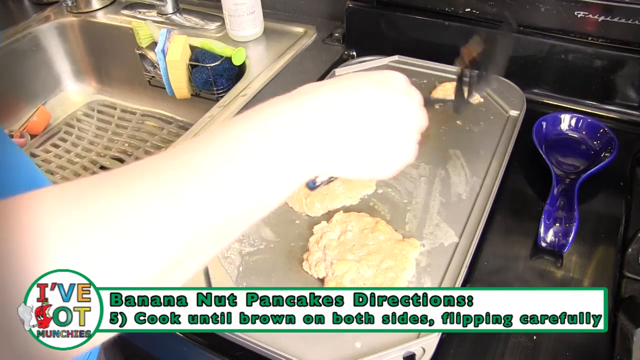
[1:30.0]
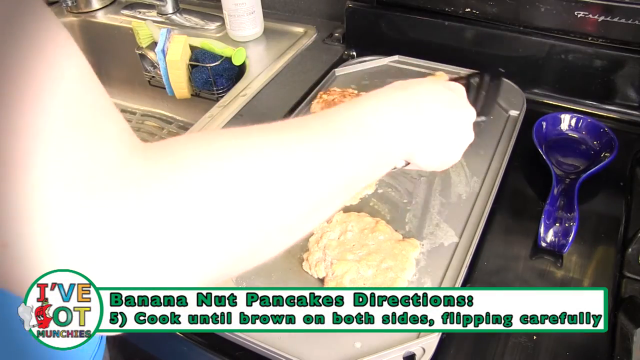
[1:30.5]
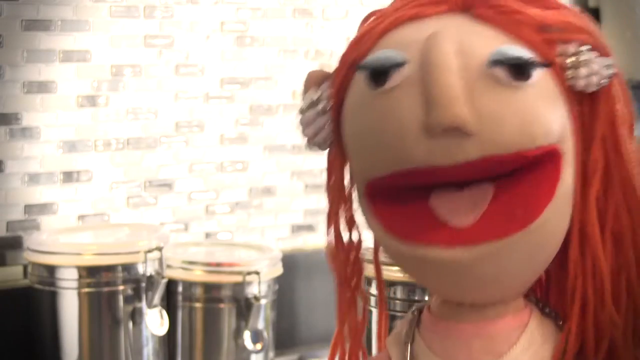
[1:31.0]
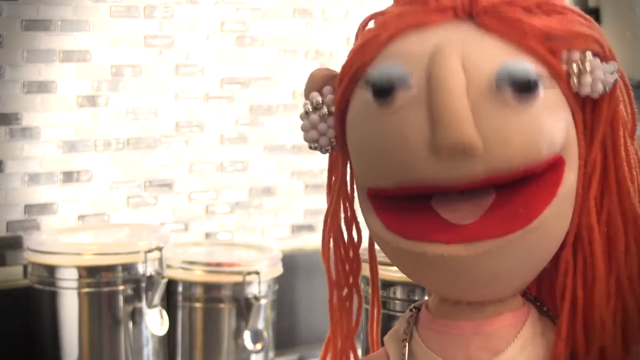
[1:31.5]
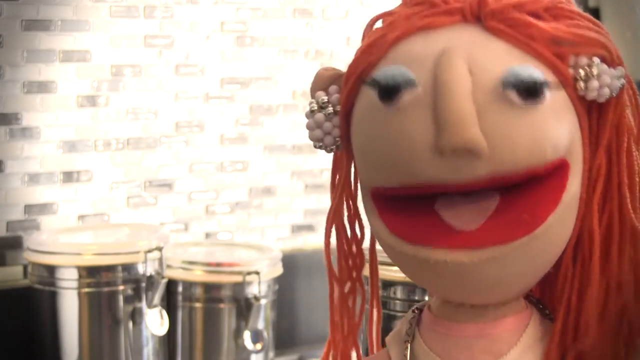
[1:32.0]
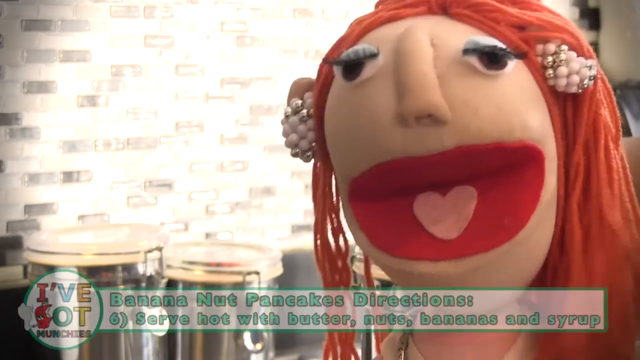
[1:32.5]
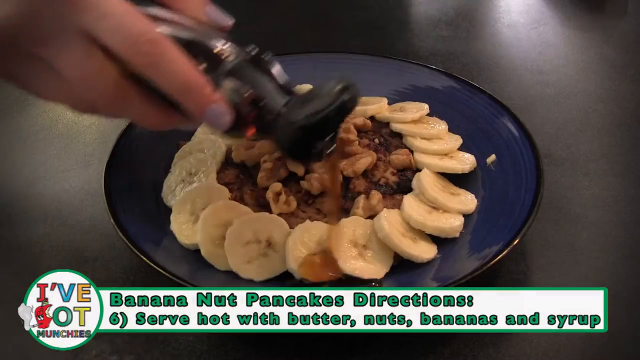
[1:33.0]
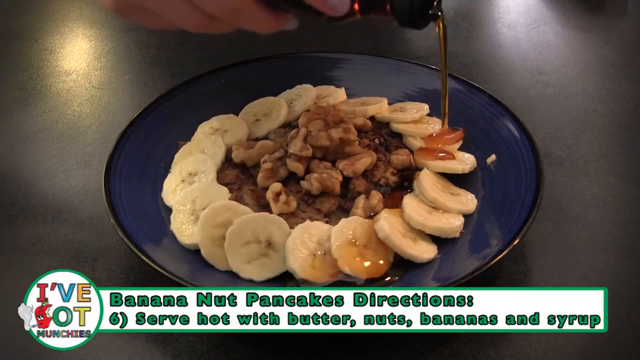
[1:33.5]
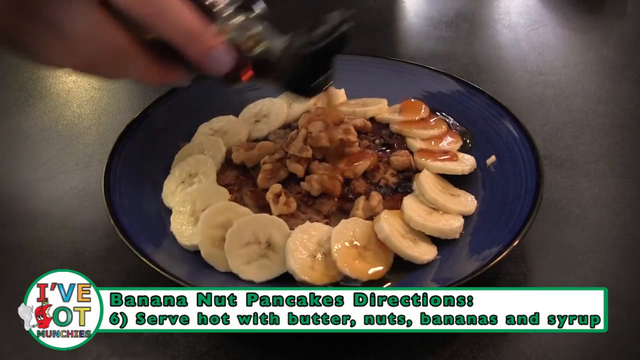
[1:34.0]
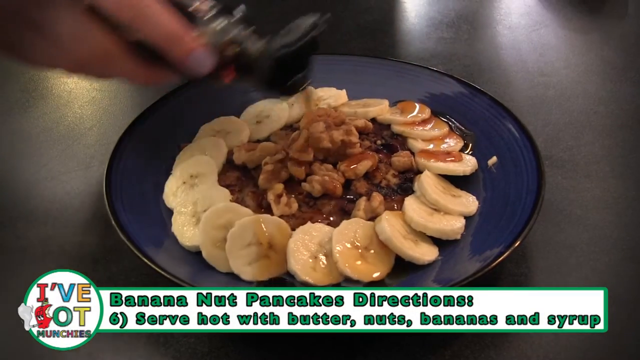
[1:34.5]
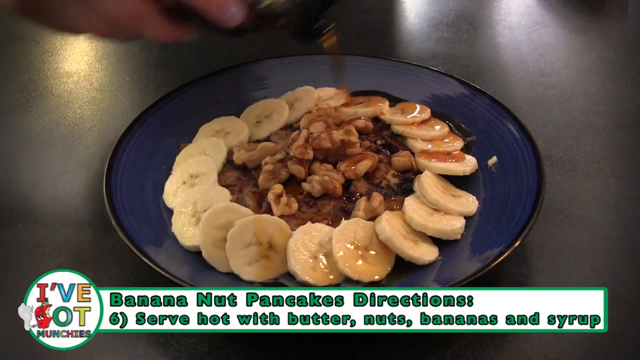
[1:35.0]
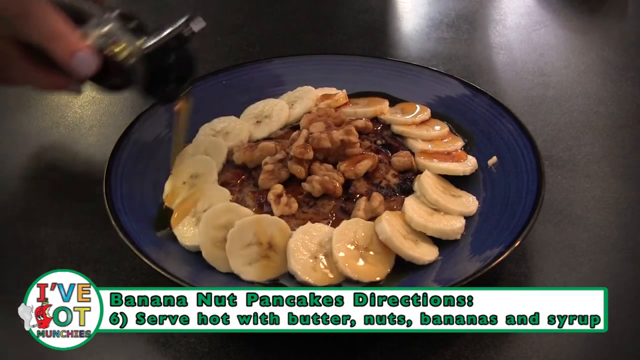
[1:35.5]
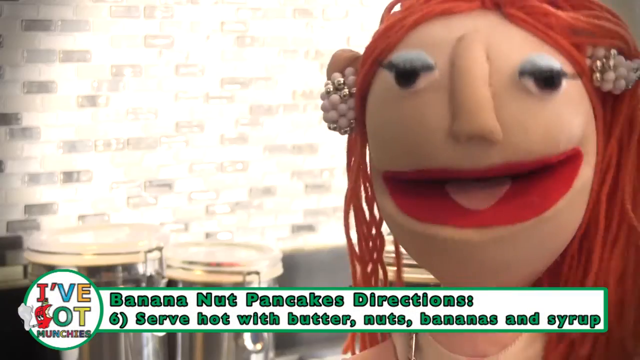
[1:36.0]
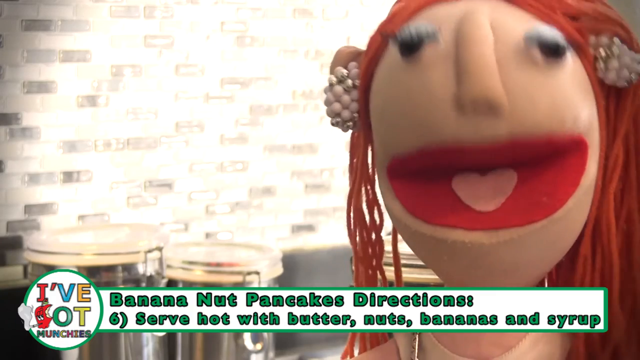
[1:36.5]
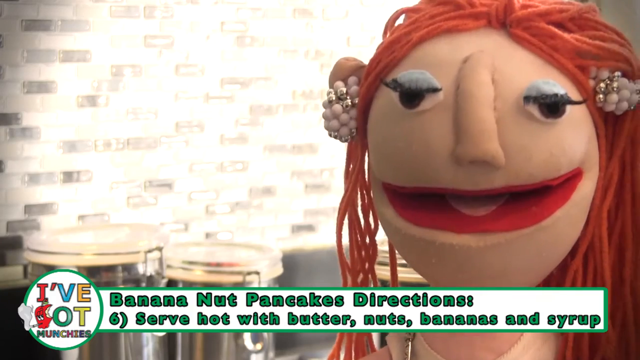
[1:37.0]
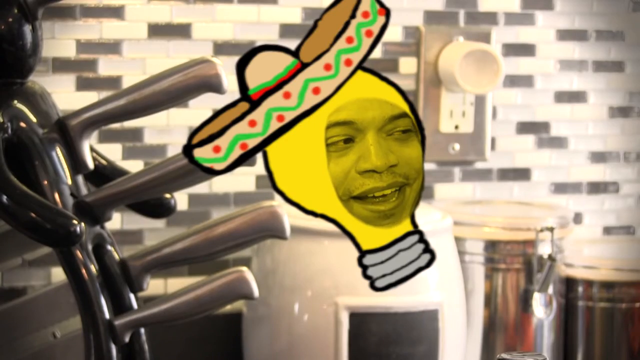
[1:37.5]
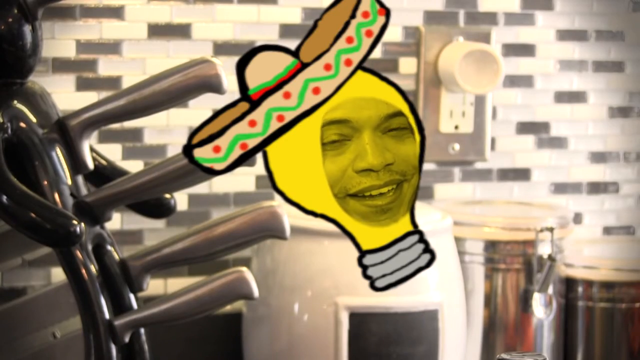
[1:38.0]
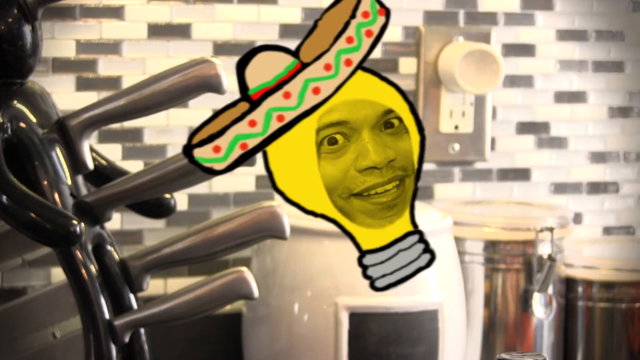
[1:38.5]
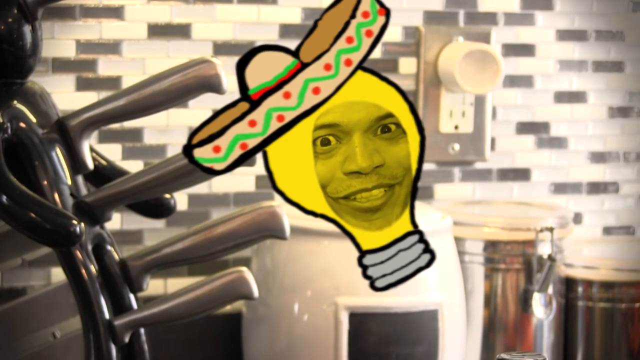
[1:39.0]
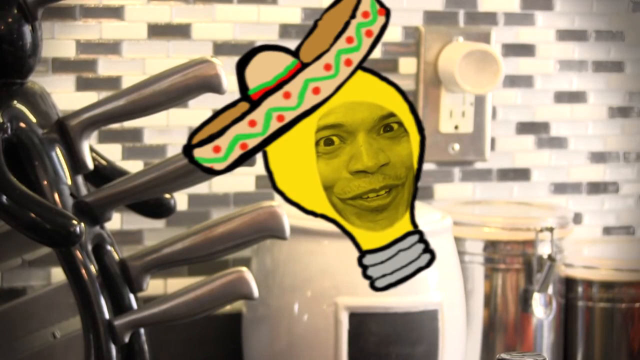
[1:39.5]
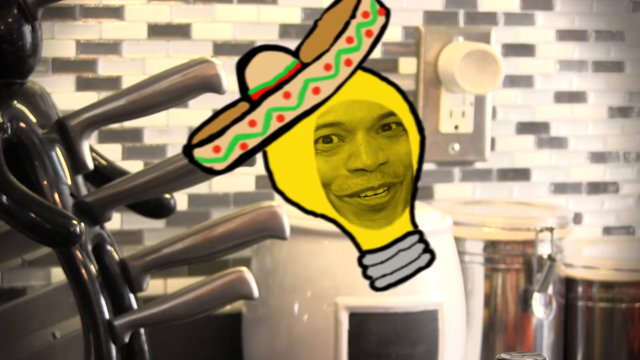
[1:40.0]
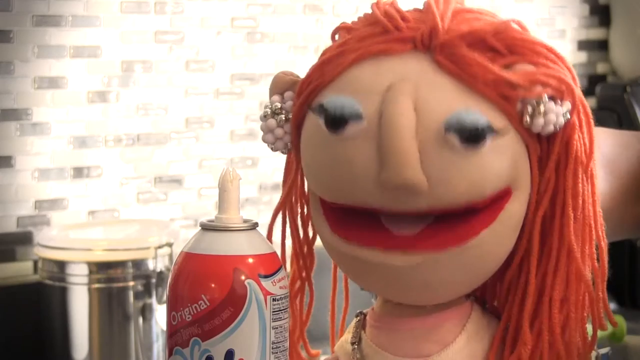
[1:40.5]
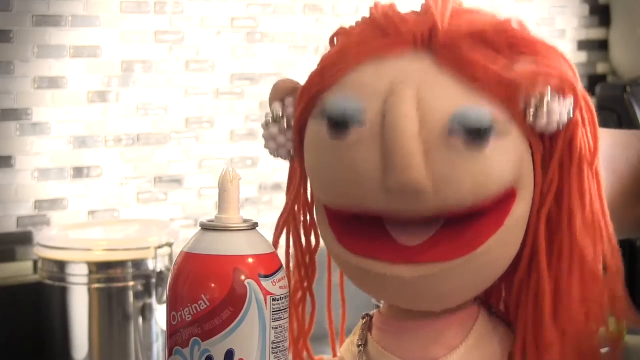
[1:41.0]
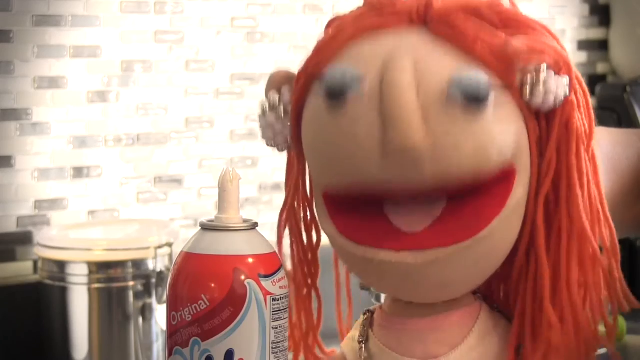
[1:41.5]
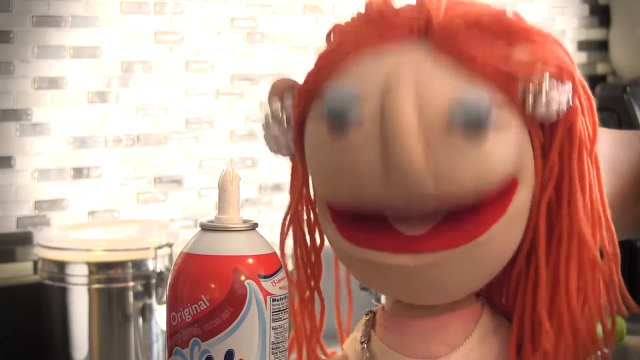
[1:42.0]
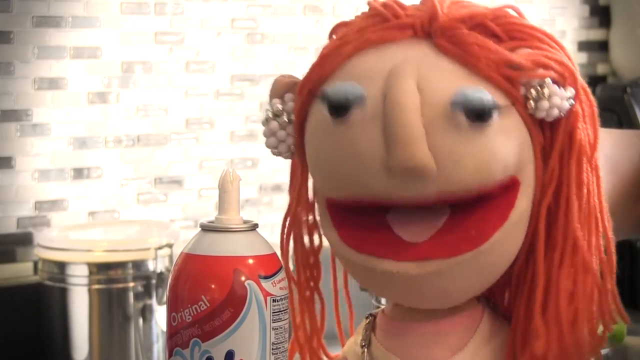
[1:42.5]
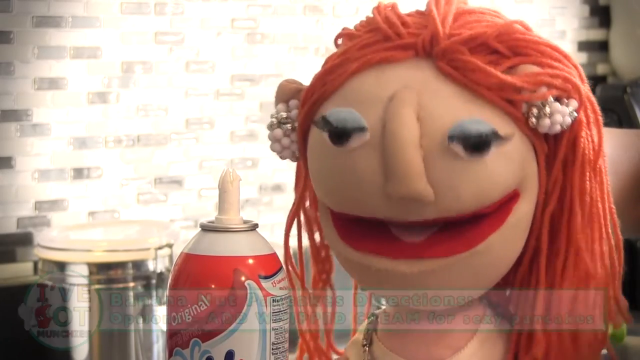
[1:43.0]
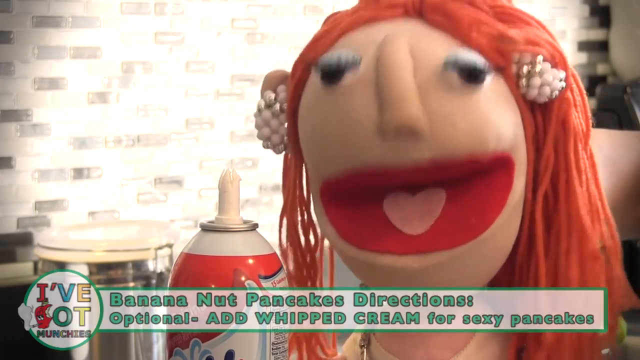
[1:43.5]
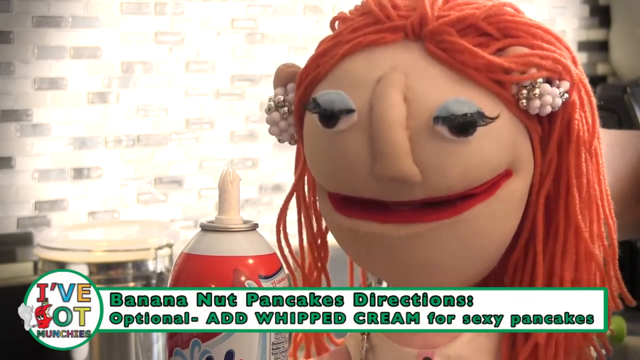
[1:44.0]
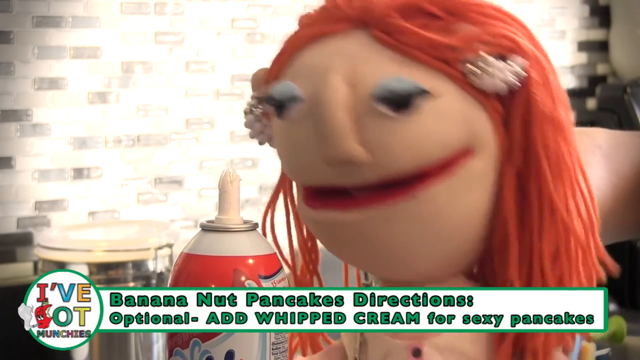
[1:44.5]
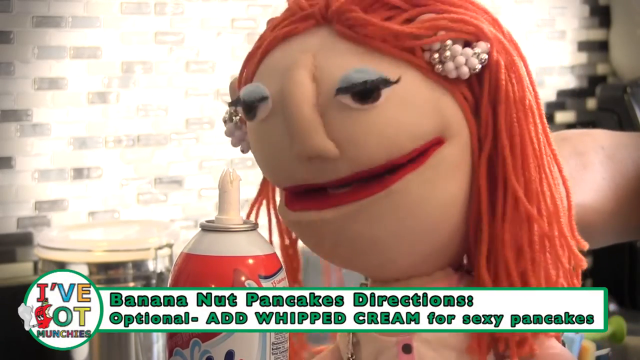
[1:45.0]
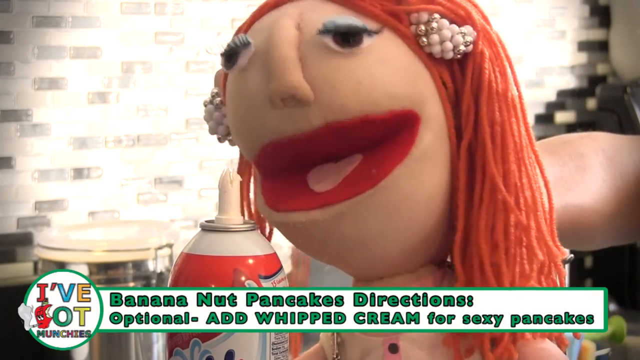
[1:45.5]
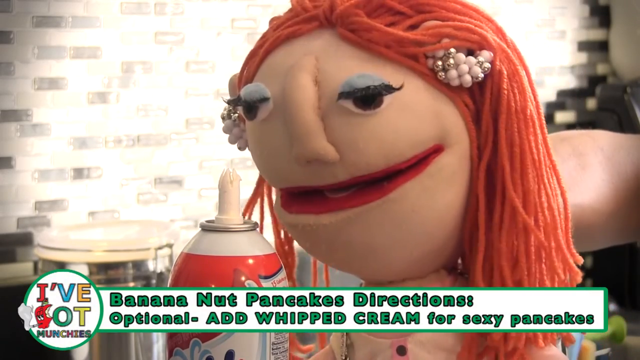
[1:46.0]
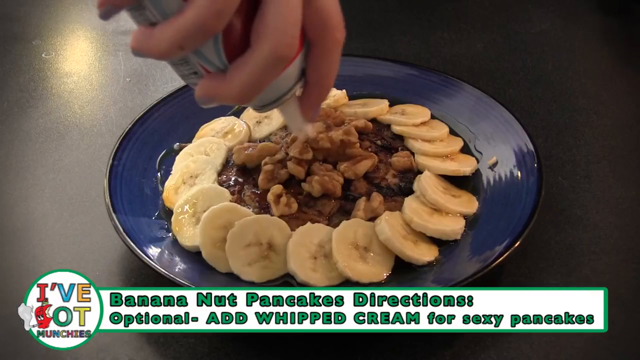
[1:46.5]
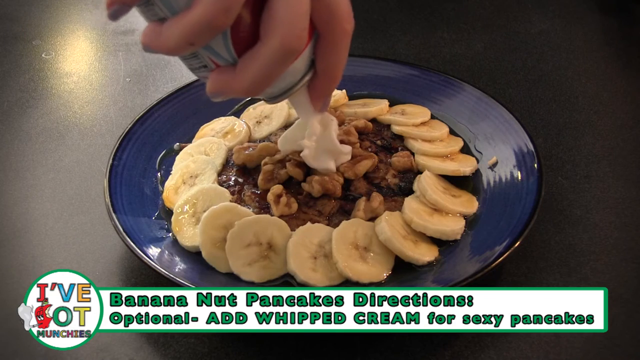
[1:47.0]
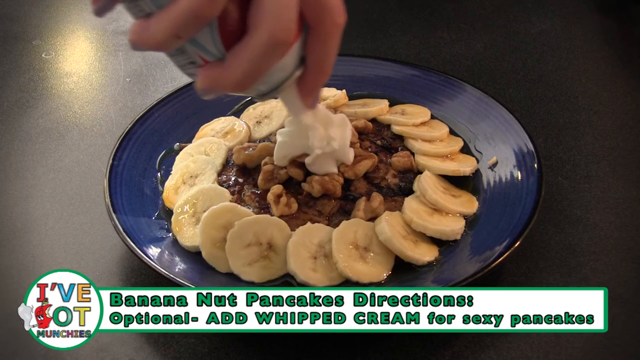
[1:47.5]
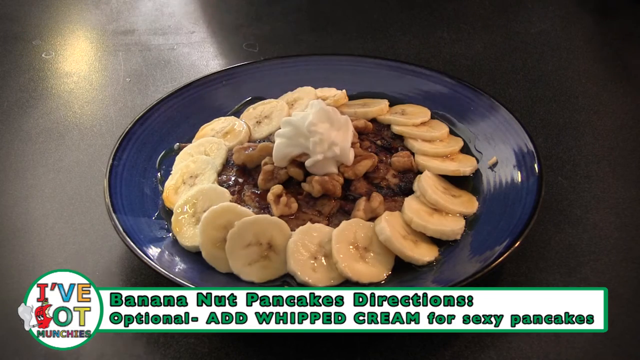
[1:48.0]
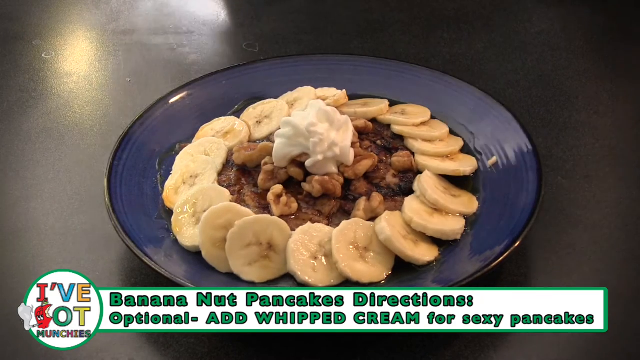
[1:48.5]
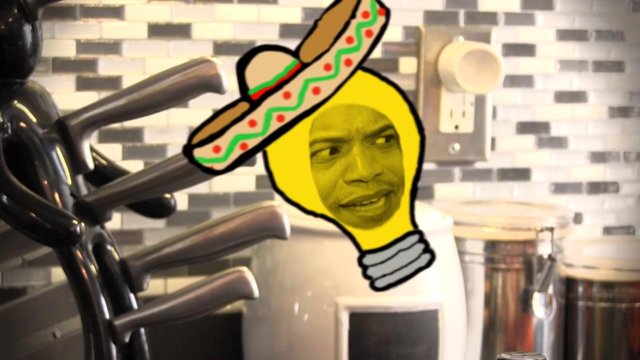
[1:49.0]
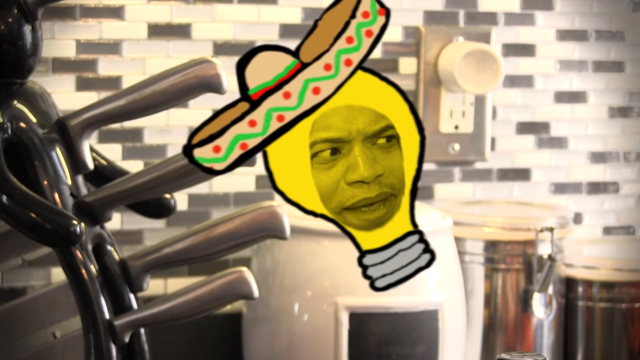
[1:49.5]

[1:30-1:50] Someone cooks pancakes on a grill with a spatula. A sink is visible on the left, with a little plastic thing covering the drain. Text at the bottom of the screen reads "i've got munchies", along with directions reading "cook until brown on both sides flipping carefully", and they do just that. The little puppet, with orange yarn hair, is shown talking. Then a display on a blue plate shows the banana pancakes, with what is apparently more nuts or some butter sprinkled on top and bananas around the outside, and lots of syrup is poured over the top. A cartoon light bulb with someone's face in it, wearing a sombrero, is shown talking, and it and the puppet talk back and forth. The bottom text reads "directions optional add whipped cream for sexy pancakes". The puppet talks, and then whipped cream is added to the top of the pancakes.